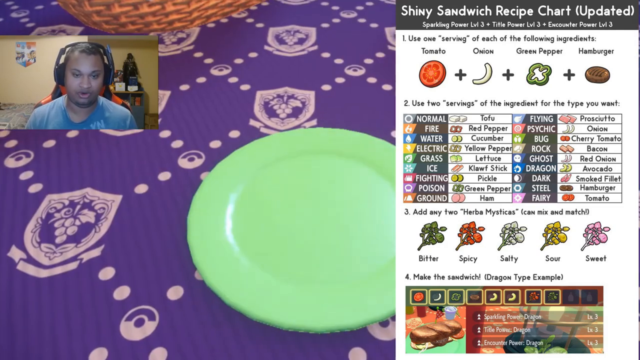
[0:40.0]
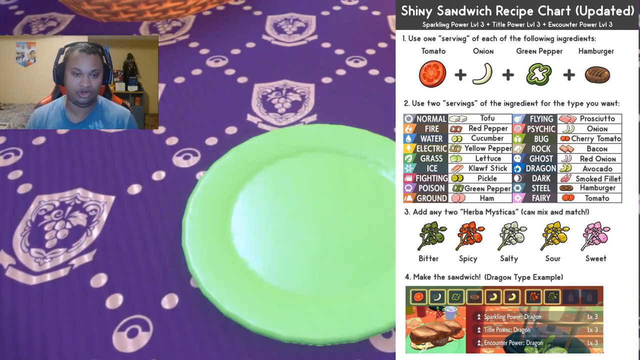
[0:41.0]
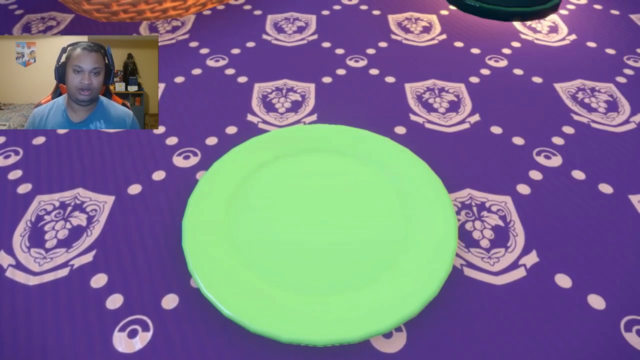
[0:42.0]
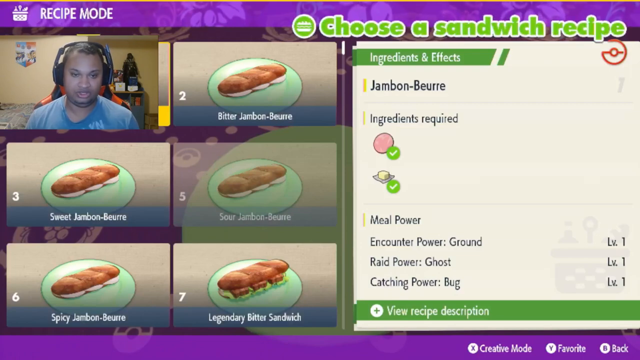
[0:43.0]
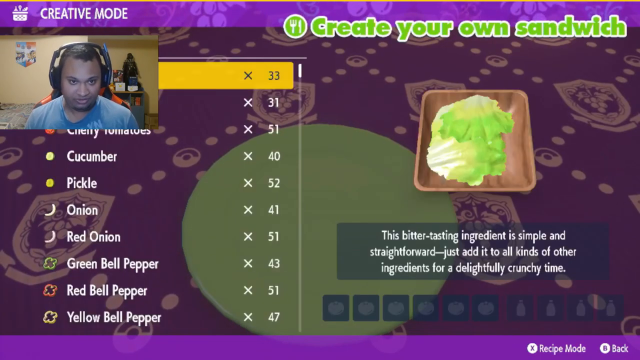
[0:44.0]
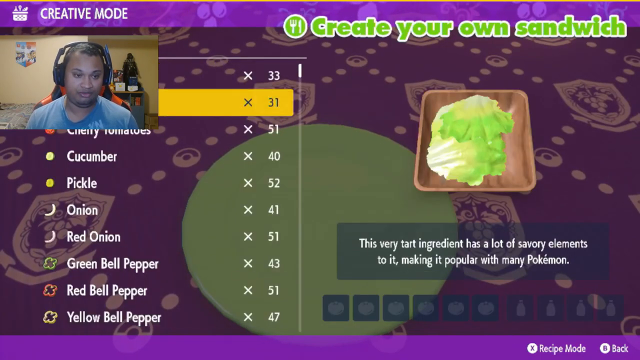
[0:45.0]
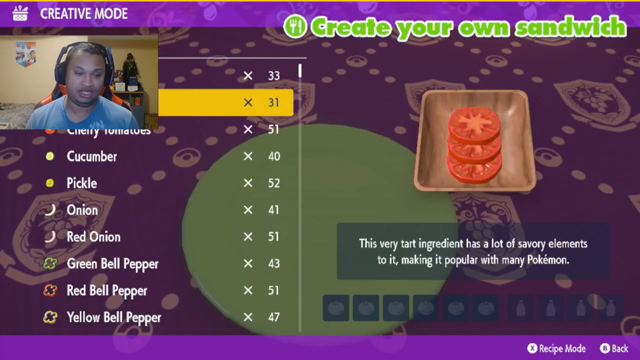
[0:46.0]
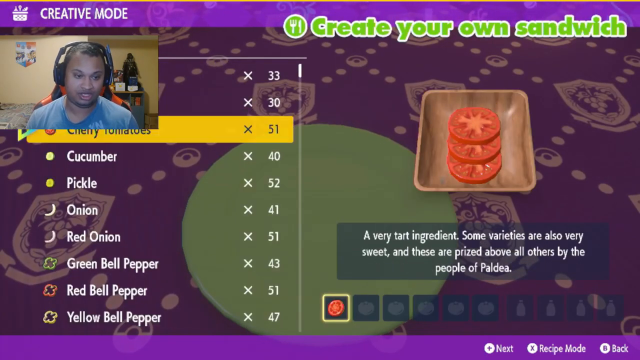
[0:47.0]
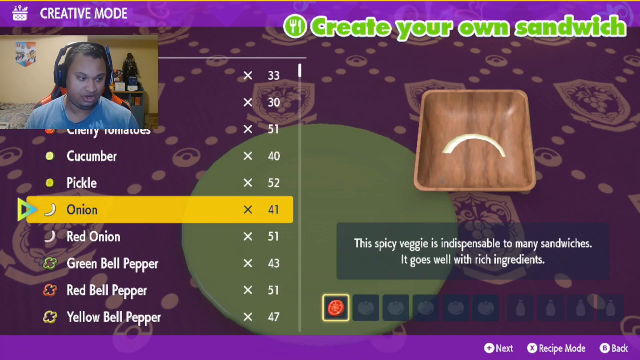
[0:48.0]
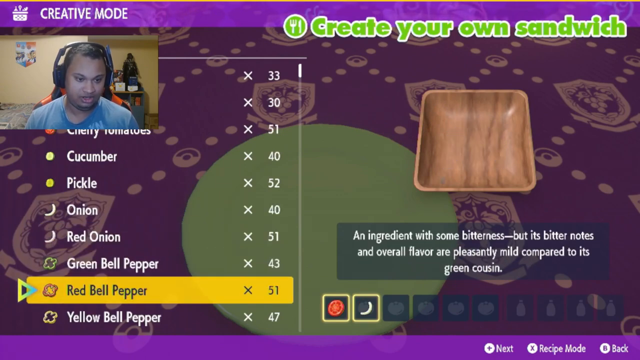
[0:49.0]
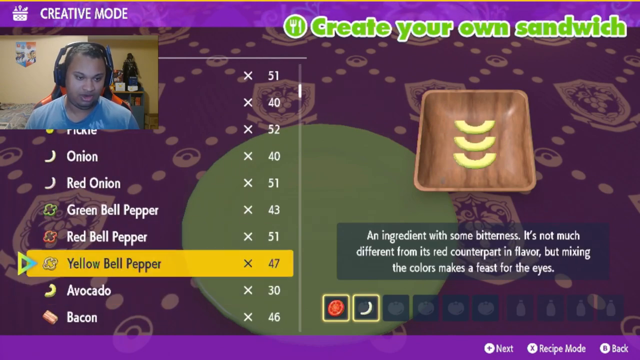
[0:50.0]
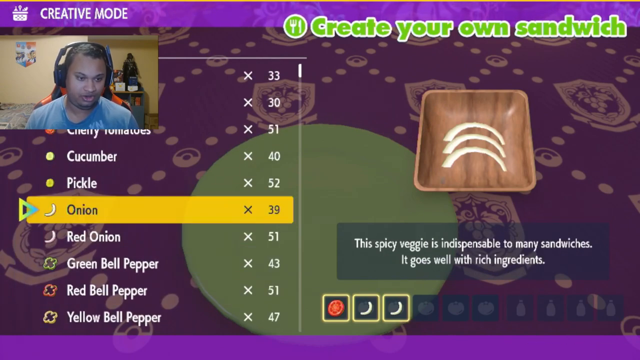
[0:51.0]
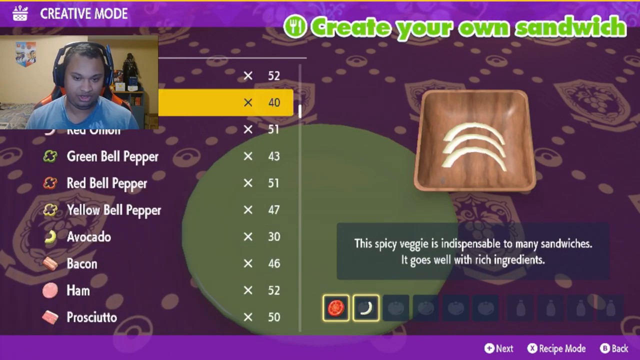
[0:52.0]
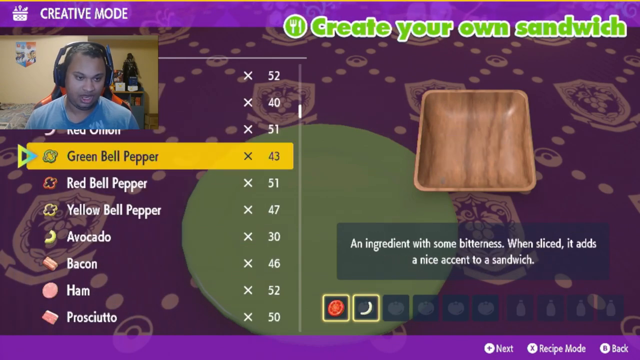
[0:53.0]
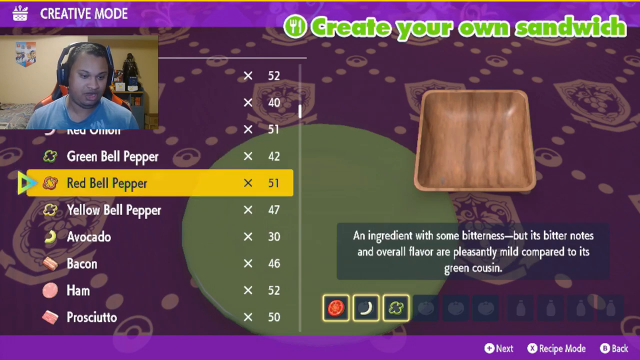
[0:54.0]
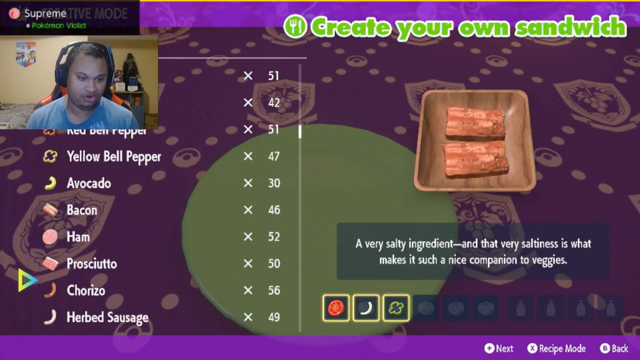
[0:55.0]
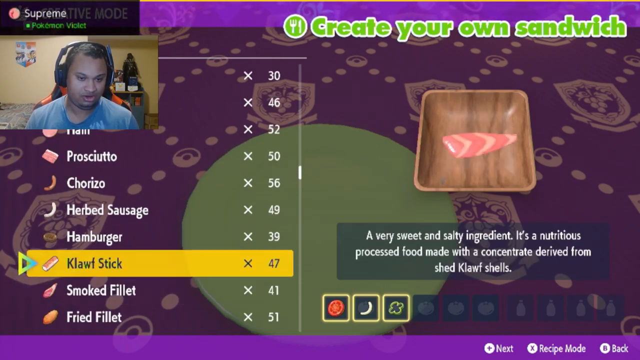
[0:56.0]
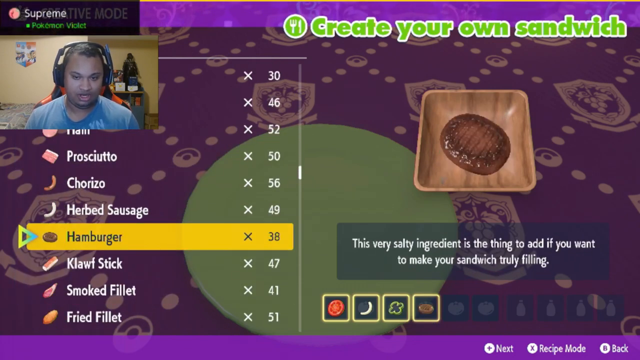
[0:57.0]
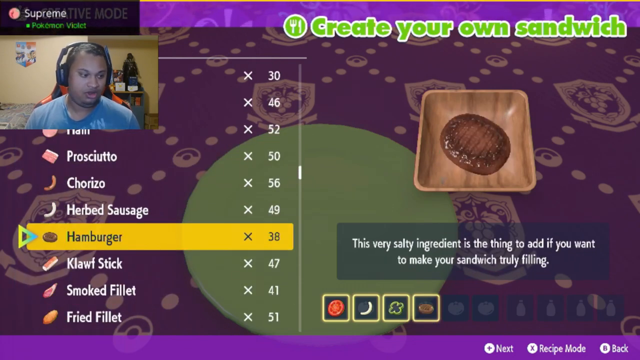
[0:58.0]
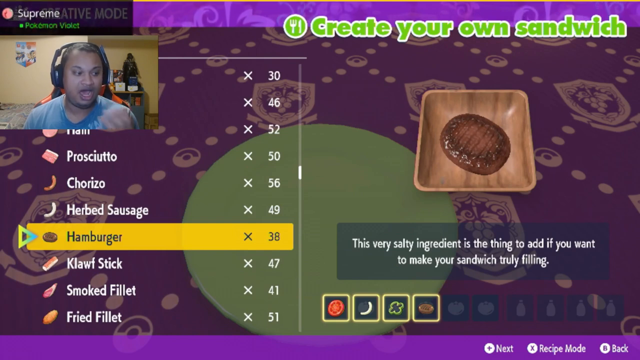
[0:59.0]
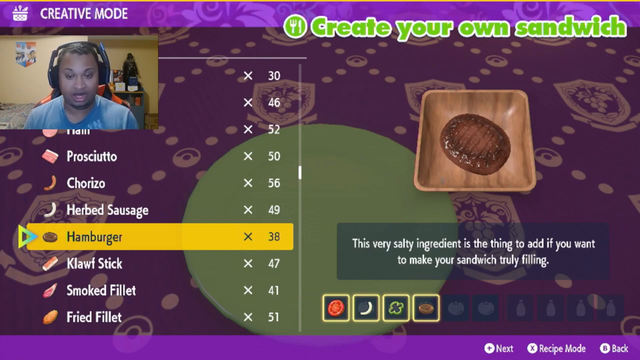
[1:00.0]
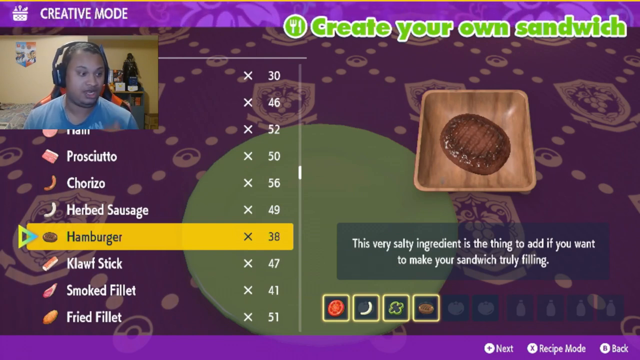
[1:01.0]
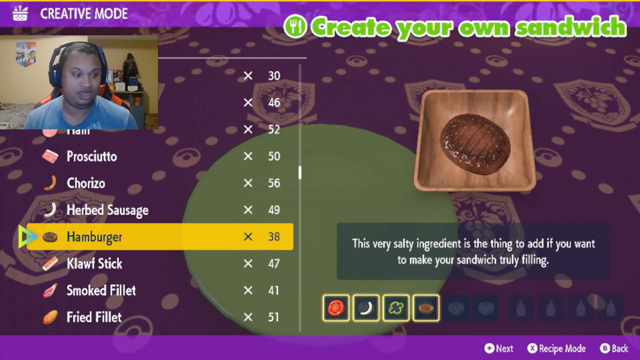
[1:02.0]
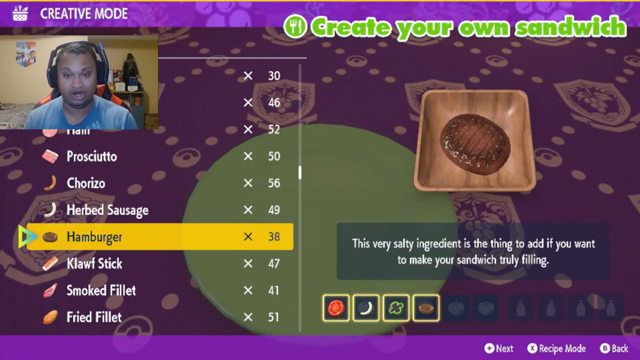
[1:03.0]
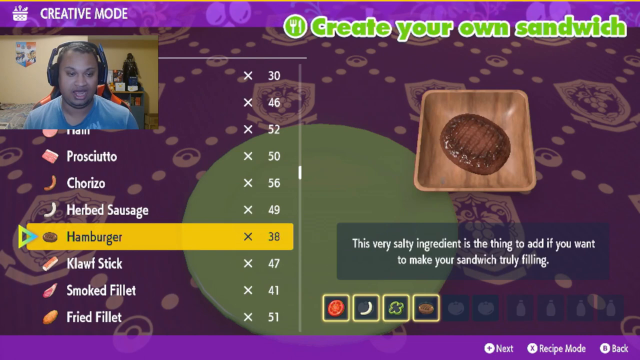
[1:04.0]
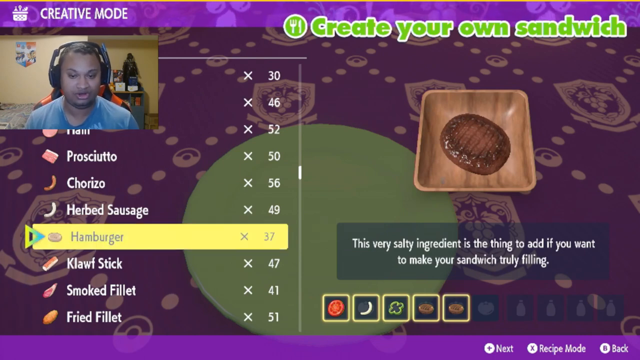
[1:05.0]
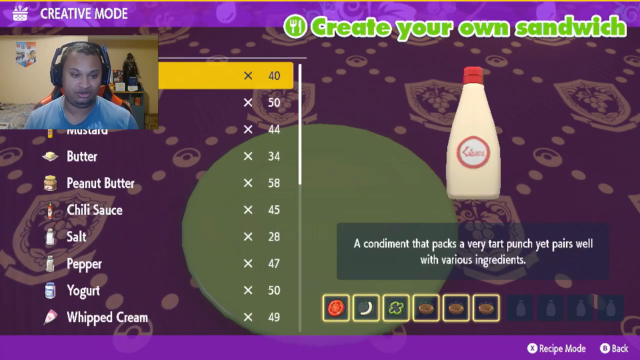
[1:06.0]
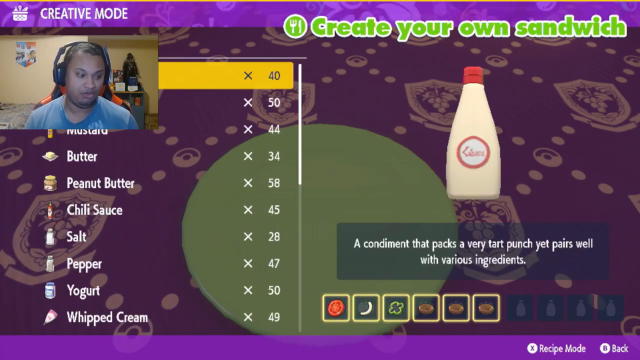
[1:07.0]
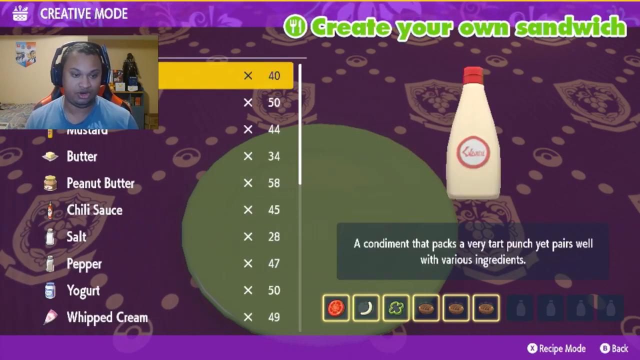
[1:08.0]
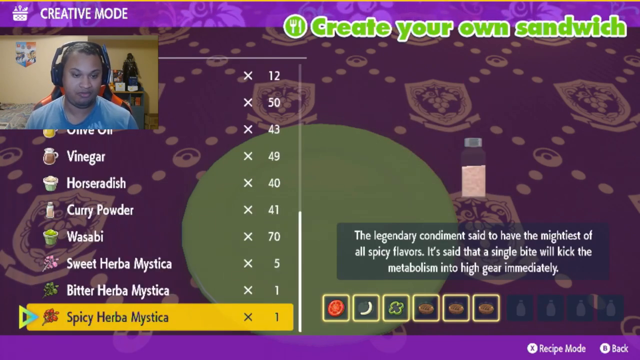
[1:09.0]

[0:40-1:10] The game shows a close-up of the picnic table, which has a purple tablecloth with a gold design of dots and roses, and what looks like a green plate. Text at the top of the screen says "create your own sandwich." The streaming host goes through many menu items to create a sandwich. The choices appear to include toppings like tomato, onion, green pepper and hamburger, and flavors such as bitter, spicy, salty, sour and sweet. Other toppings include bacon, red onion, avocado, smoked fillet, hamburger, cherry tomato, prosciutto, ham, green pepper, pickle, kiwi stick, lettuce, yellow pepper, cucumber, red pepper and tofu. The screen says he has to use two servings from the ingredients list for his sandwich, and each ingredient is tied to a different element; apparently different ingredients feed different Pokemon.